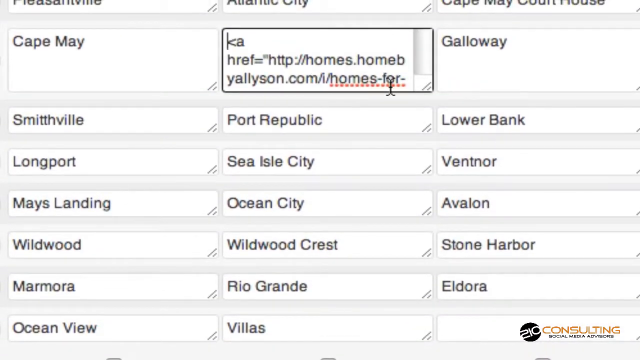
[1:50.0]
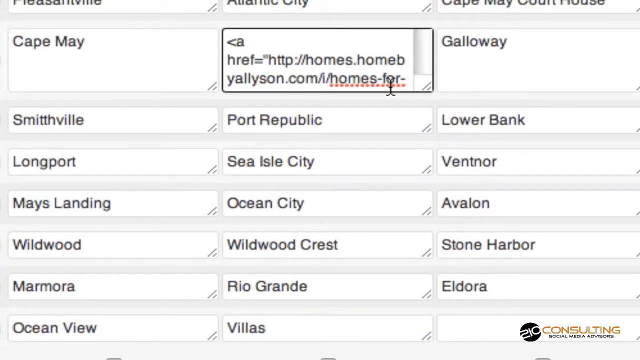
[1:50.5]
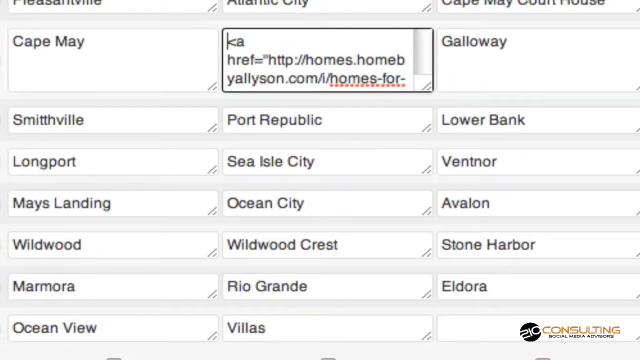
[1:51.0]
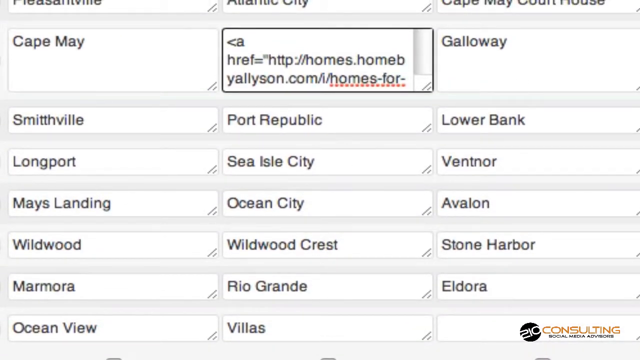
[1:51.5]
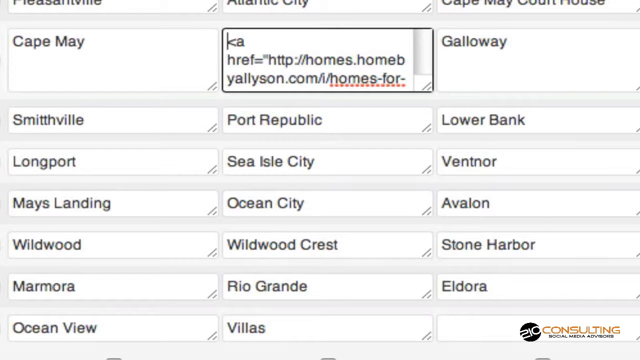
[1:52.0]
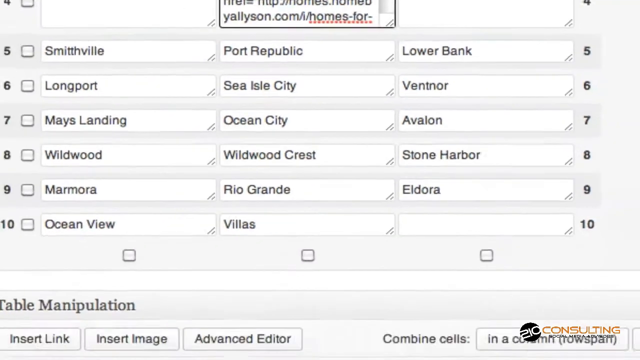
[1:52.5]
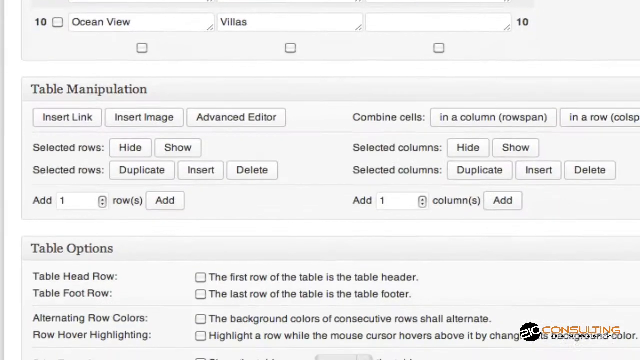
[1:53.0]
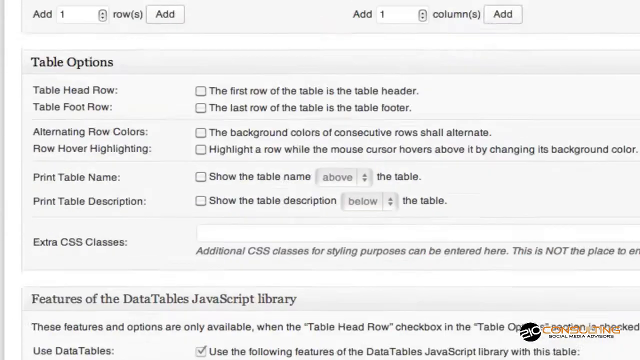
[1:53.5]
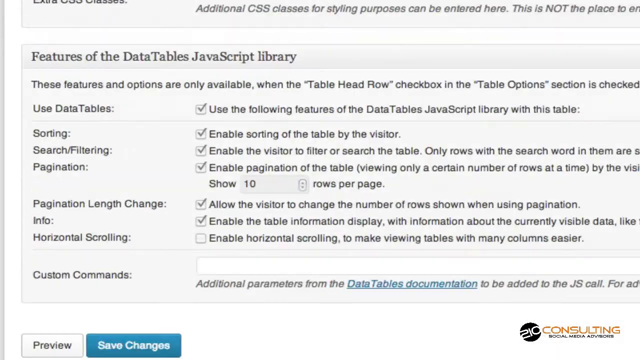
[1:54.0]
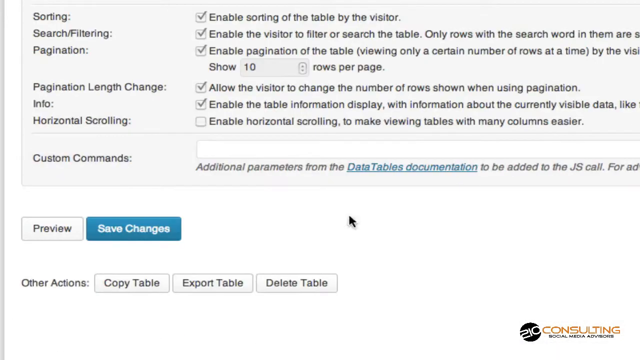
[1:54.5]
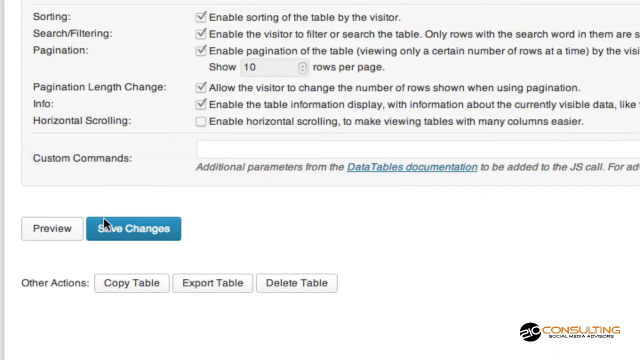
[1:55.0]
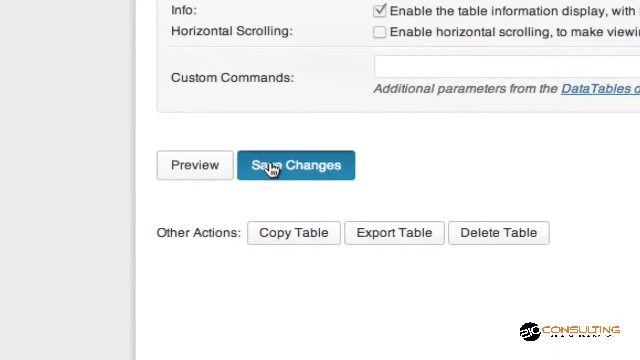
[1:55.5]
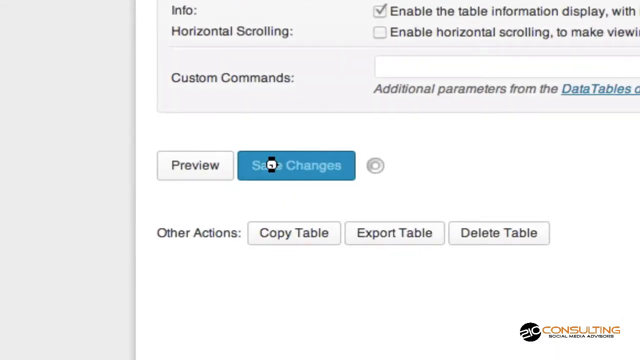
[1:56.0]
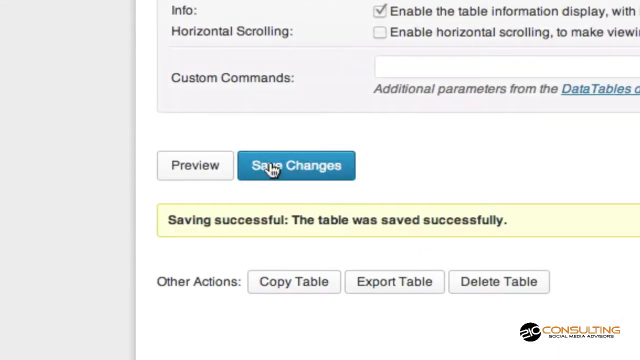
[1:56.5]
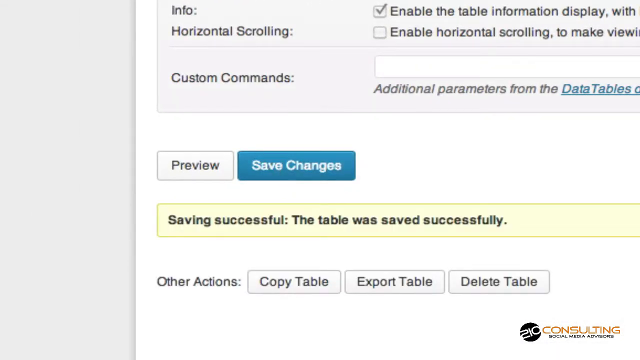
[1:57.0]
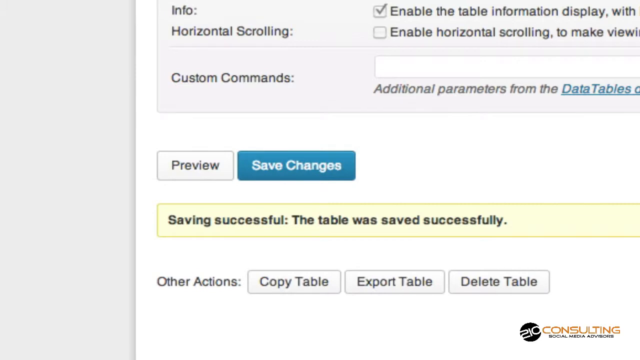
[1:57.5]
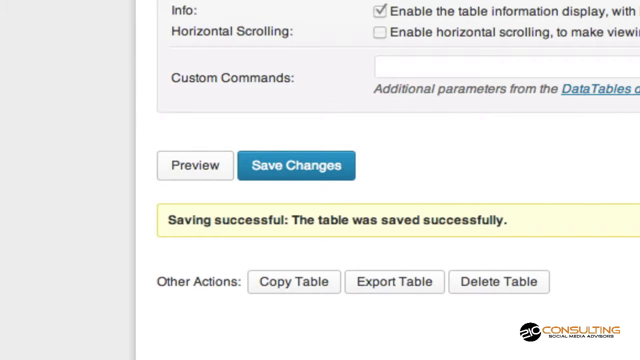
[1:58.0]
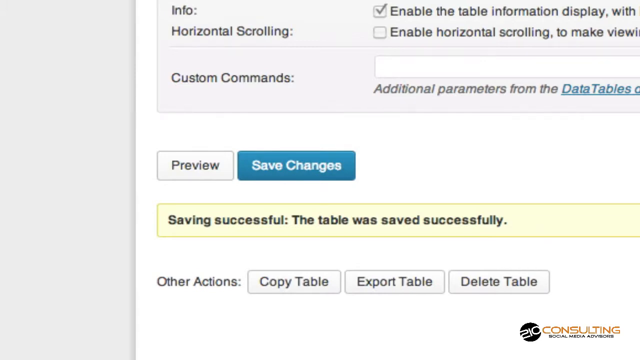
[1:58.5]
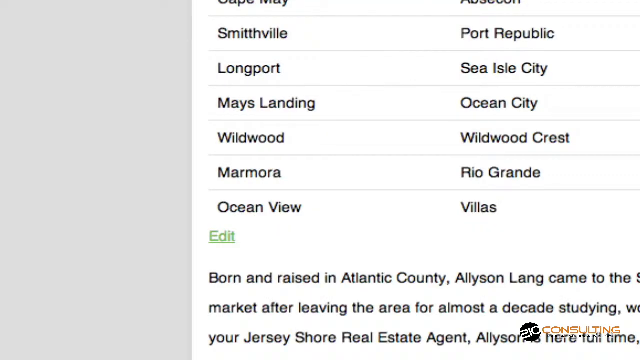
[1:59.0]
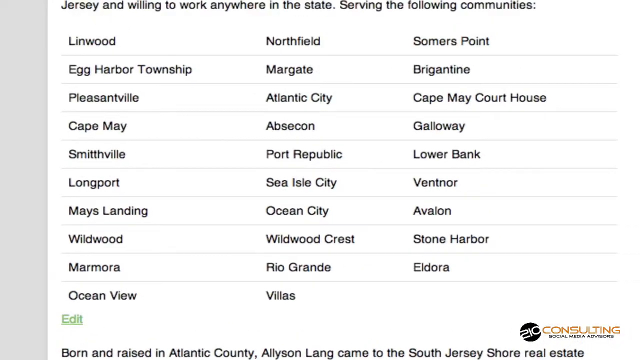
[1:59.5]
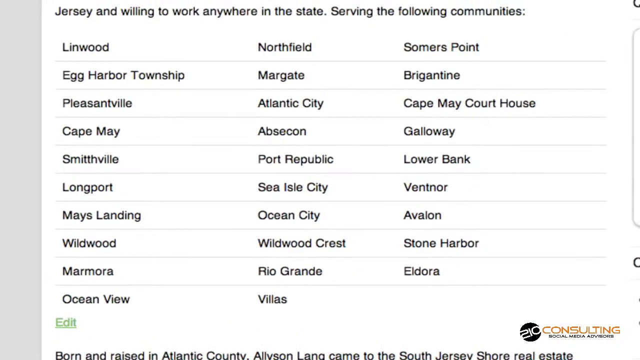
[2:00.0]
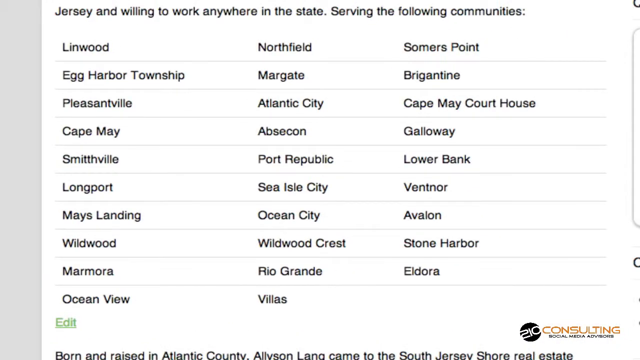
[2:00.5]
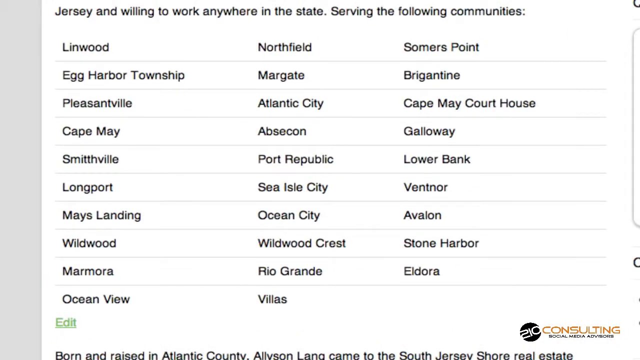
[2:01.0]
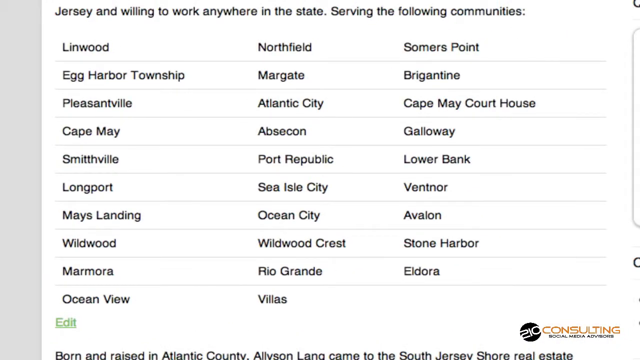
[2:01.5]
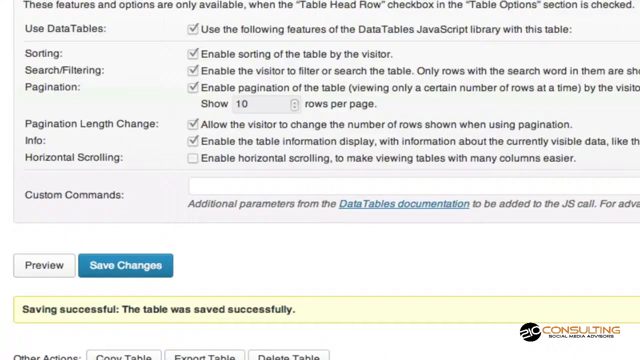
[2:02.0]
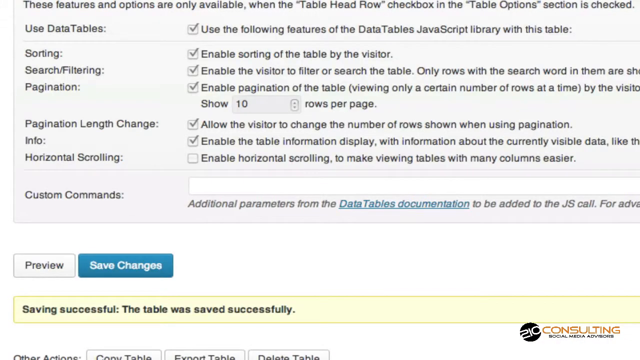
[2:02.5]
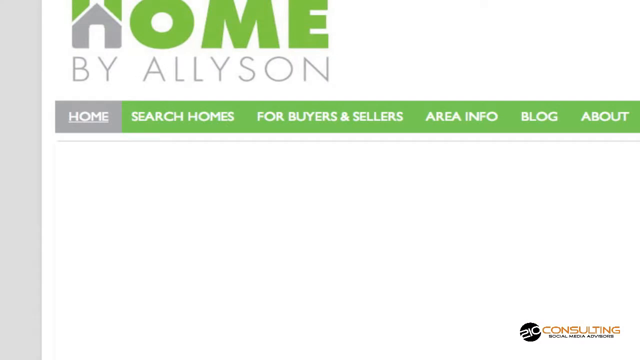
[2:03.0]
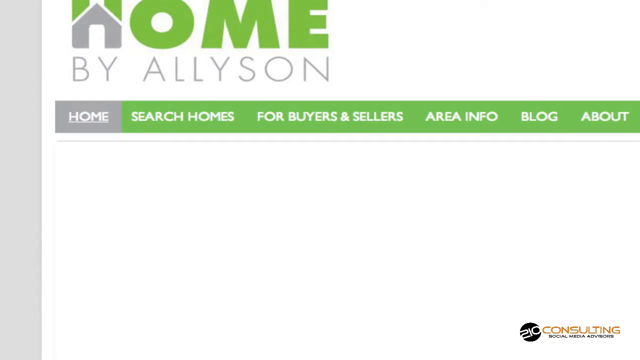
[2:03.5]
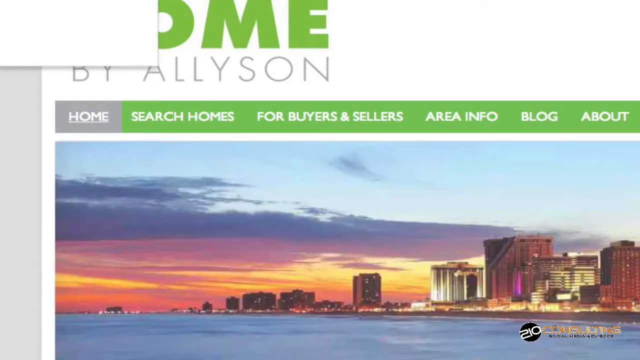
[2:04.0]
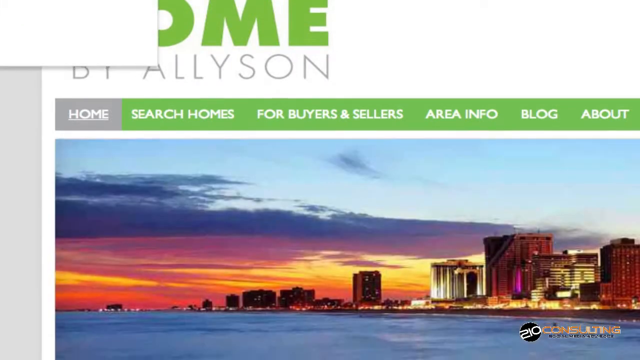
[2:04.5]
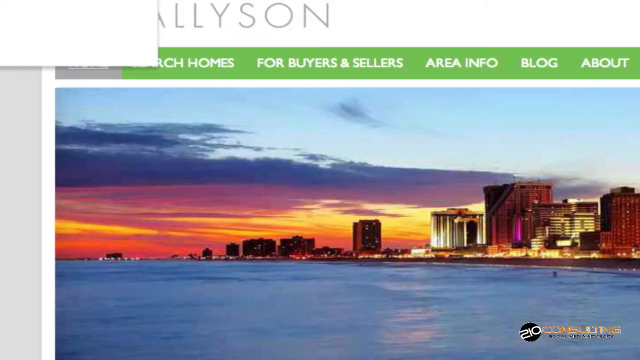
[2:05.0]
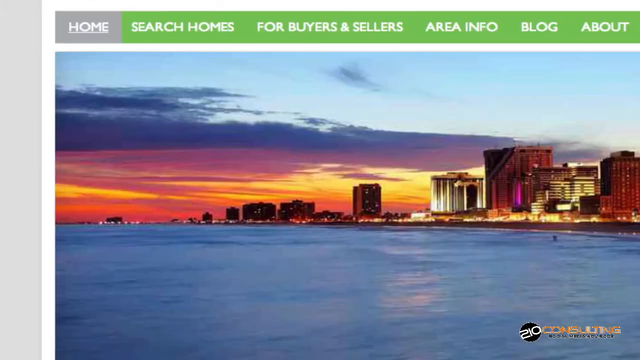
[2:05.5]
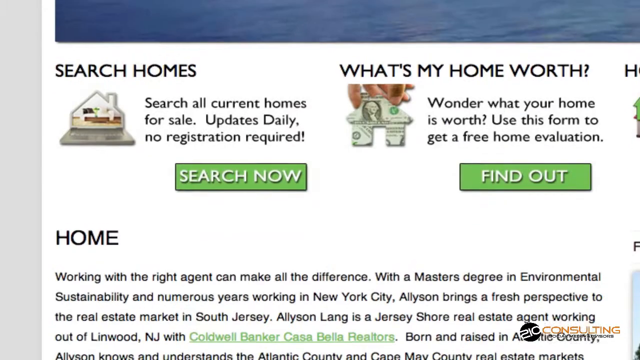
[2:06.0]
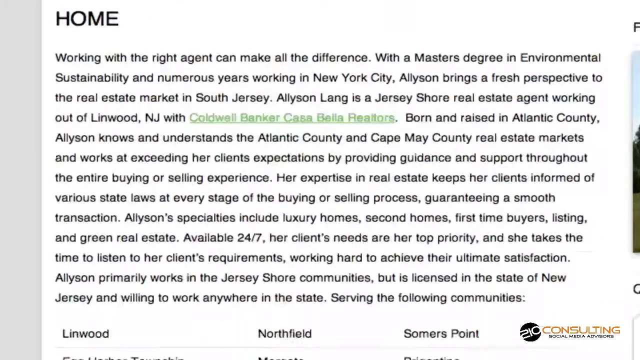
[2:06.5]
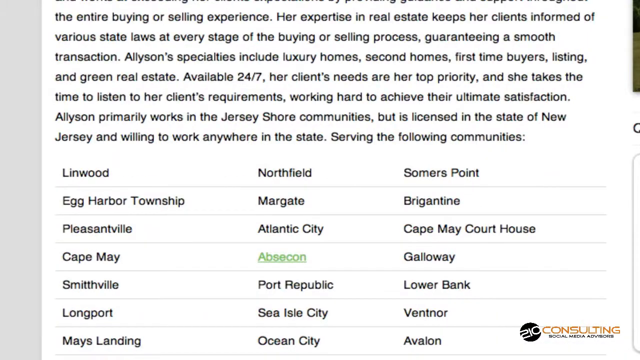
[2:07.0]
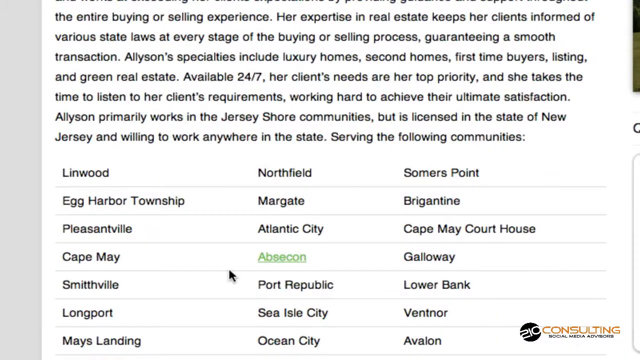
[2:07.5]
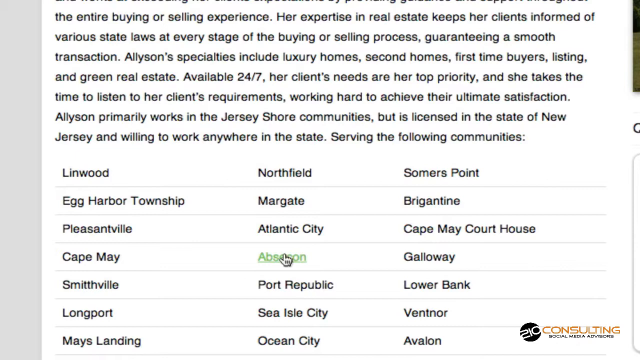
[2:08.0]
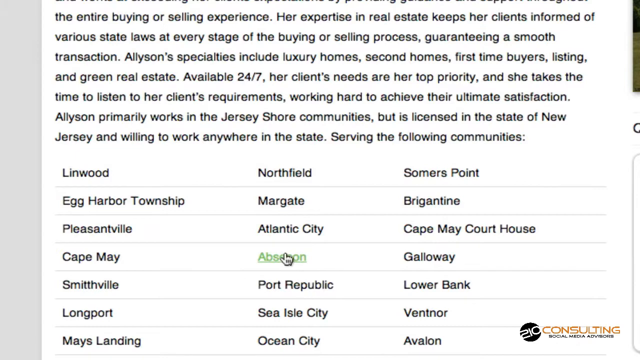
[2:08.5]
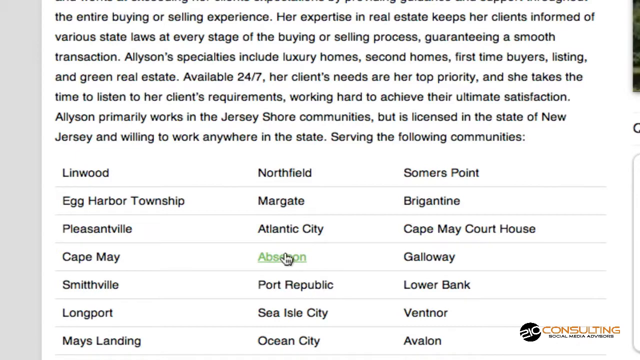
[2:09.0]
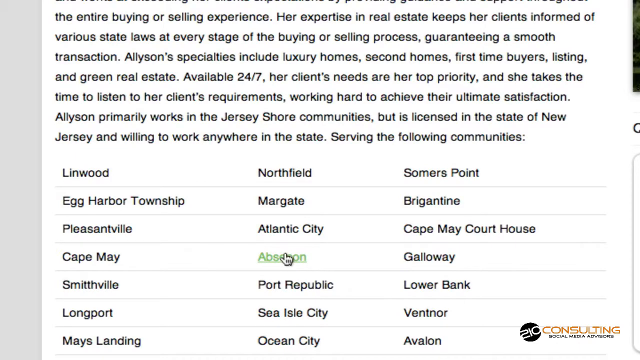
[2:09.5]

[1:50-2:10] The list of cities is on screen, with a middle entry field selected between Cape May and Galloway and directly above Port Republic. A piece of code has been entered in this box. The view zooms out and quickly scrolls all the way to the bottom, where the buttons Preview and Save Changes are. The user clicks Save Changes. A little watch briefly appears to indicate the website is working, and then a yellow banner appears below the Preview and Save Changes buttons that reads "Saving successful. The table was saved successfully." The view scrolls or pans back out to the entire list of the communities that Homes by Allison serves. It then goes back to the Home by Allison webpage and scrolls down quickly to the area that reads "Search homes what's my home worth", then further down to a paragraph giving a bit of a bio about Allison, and then shows the list of communities she serves, with ABSCON highlighted in green.